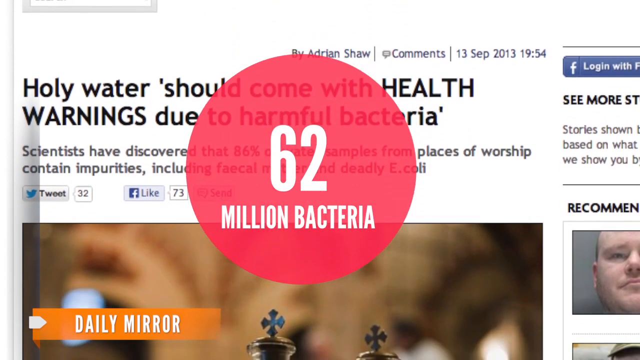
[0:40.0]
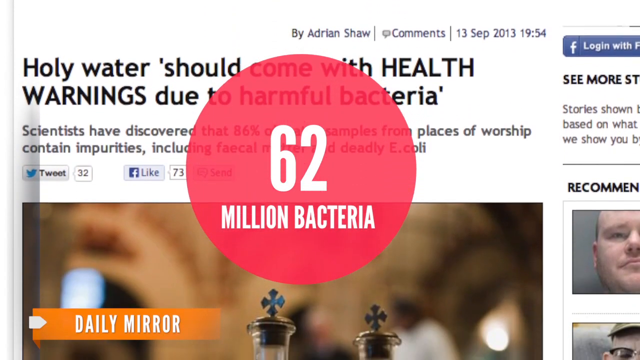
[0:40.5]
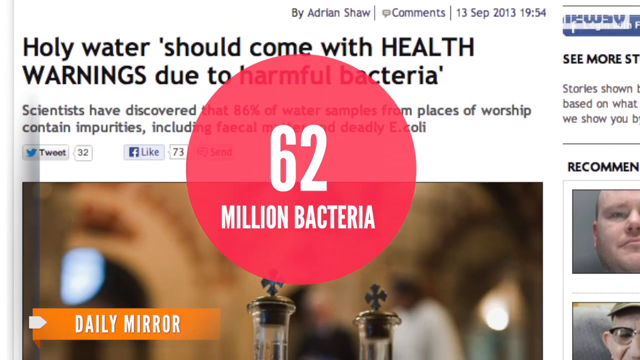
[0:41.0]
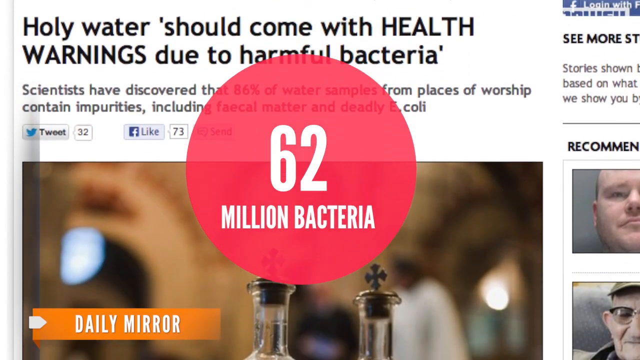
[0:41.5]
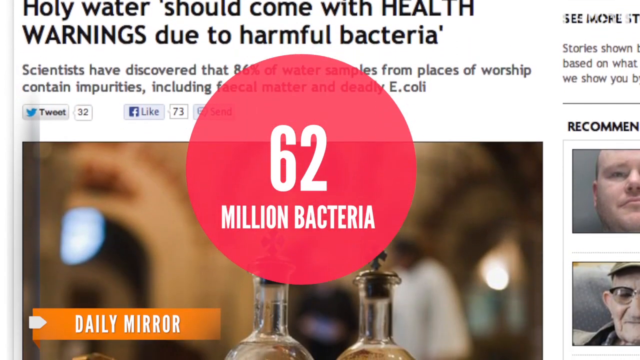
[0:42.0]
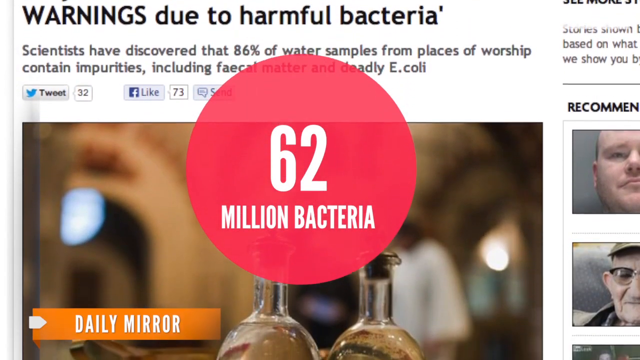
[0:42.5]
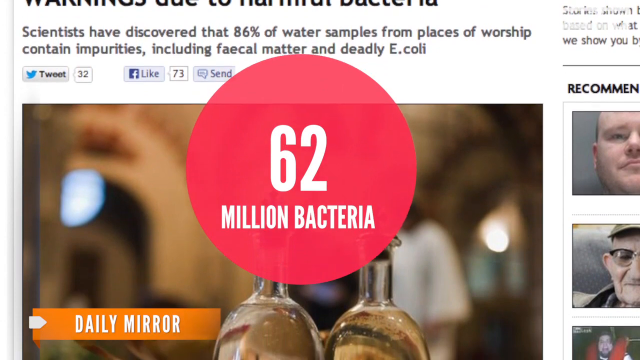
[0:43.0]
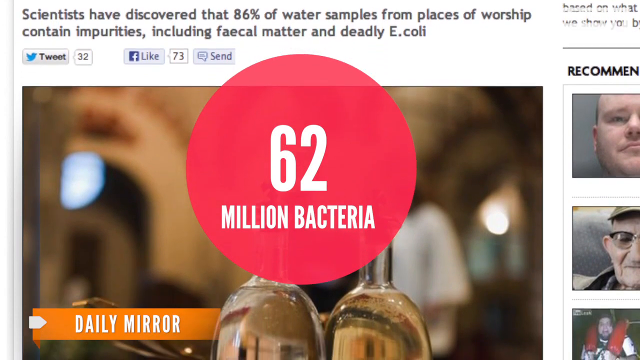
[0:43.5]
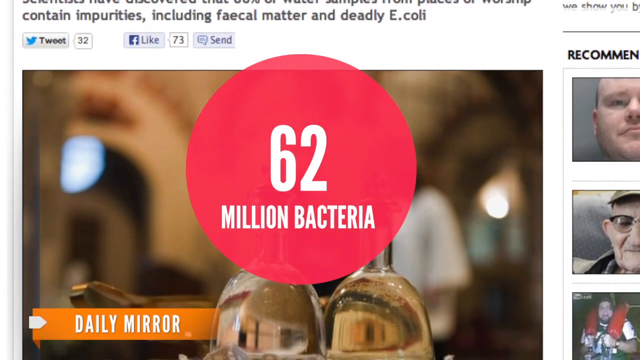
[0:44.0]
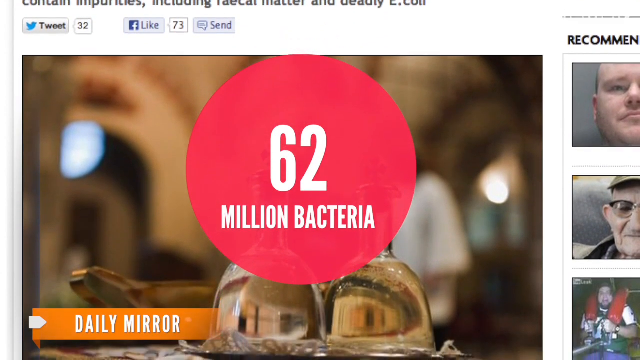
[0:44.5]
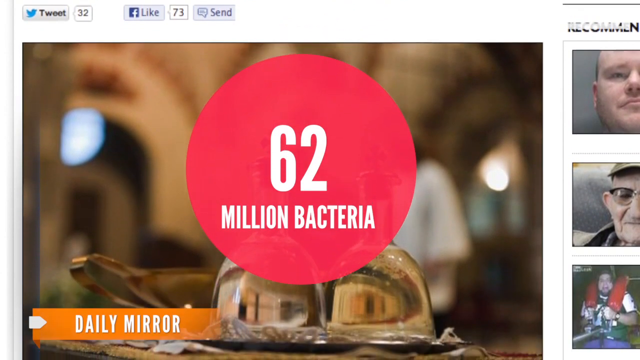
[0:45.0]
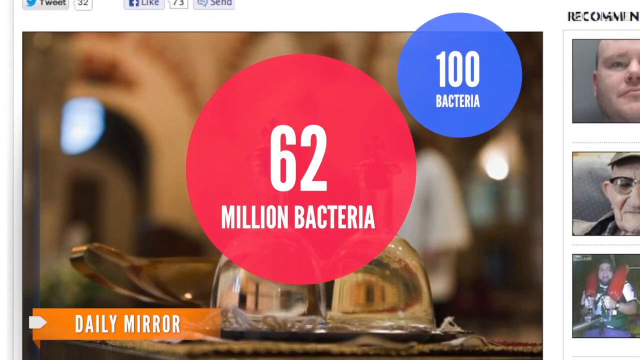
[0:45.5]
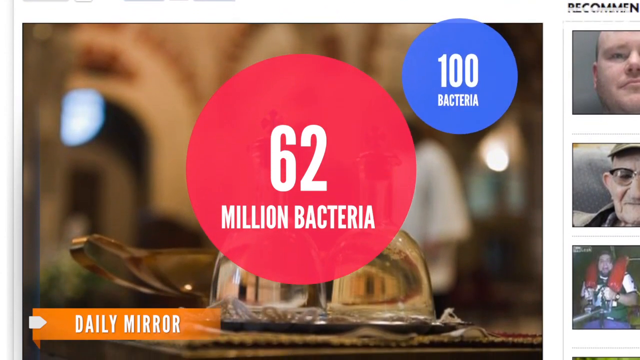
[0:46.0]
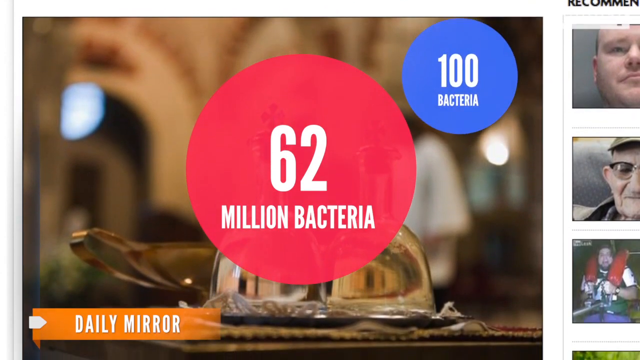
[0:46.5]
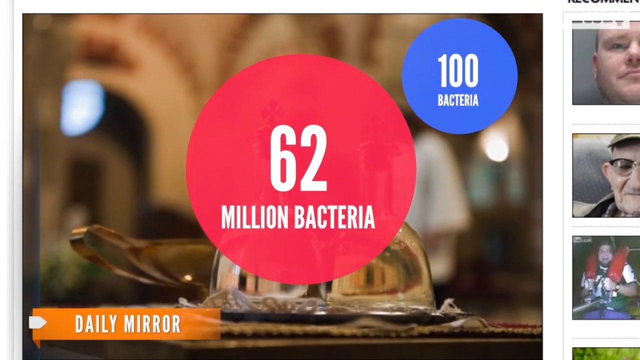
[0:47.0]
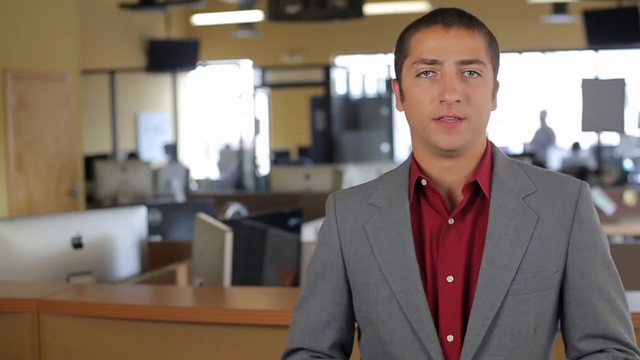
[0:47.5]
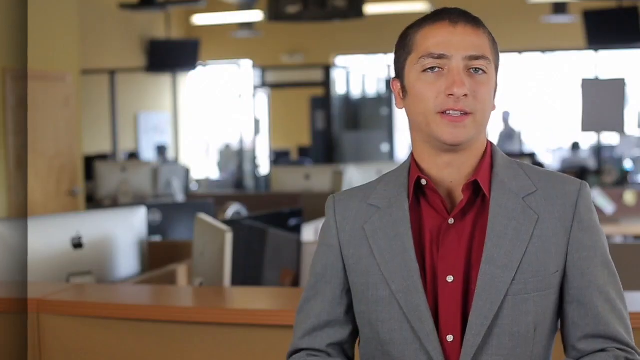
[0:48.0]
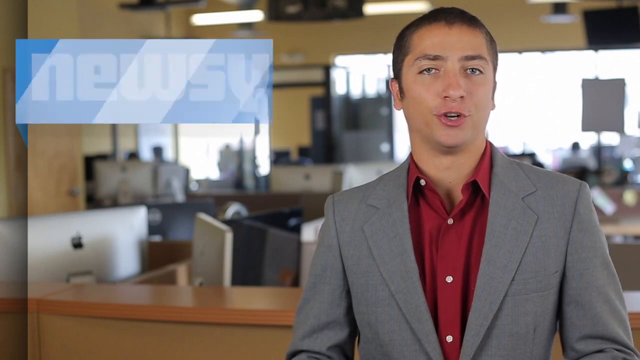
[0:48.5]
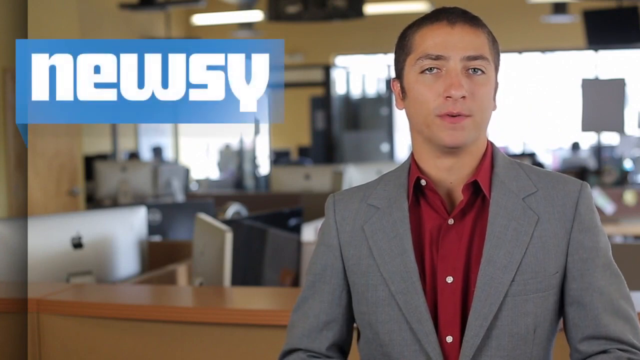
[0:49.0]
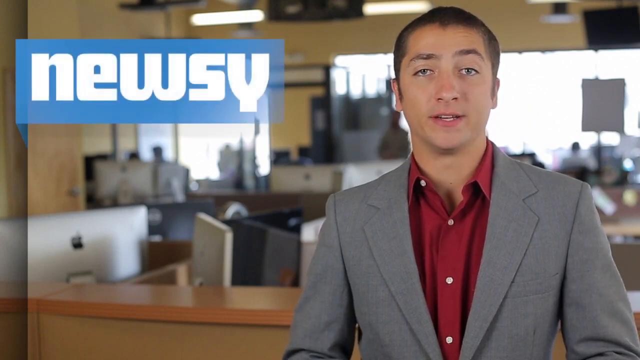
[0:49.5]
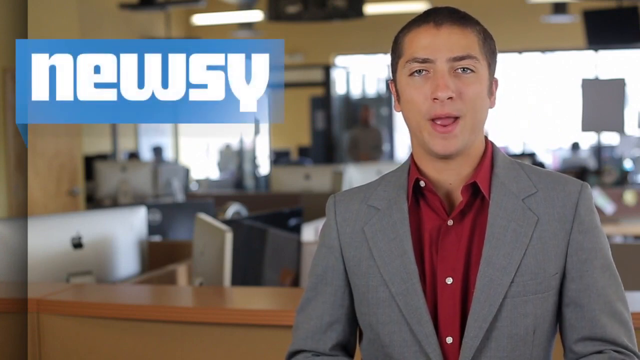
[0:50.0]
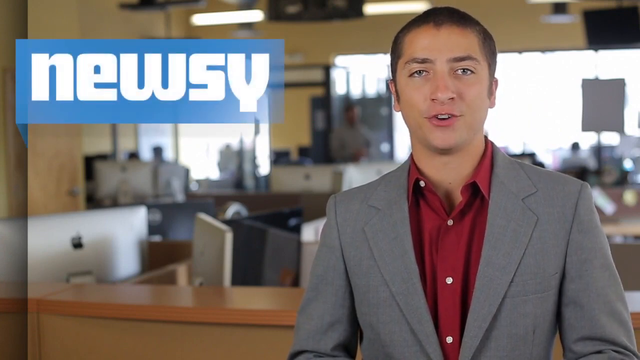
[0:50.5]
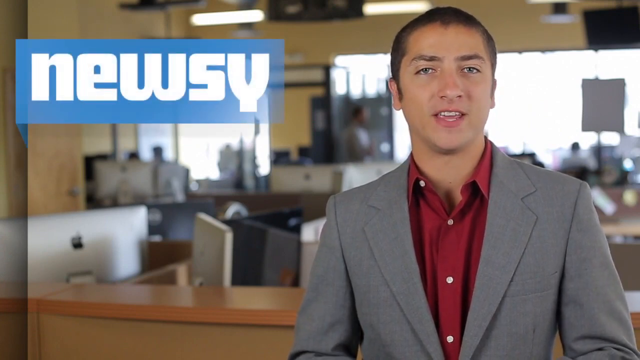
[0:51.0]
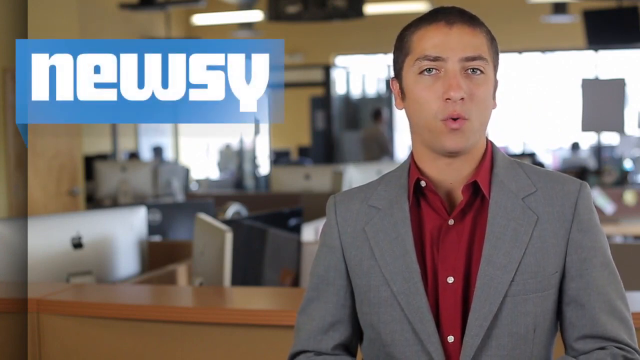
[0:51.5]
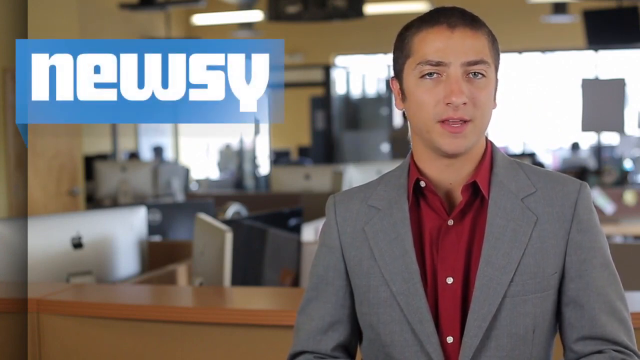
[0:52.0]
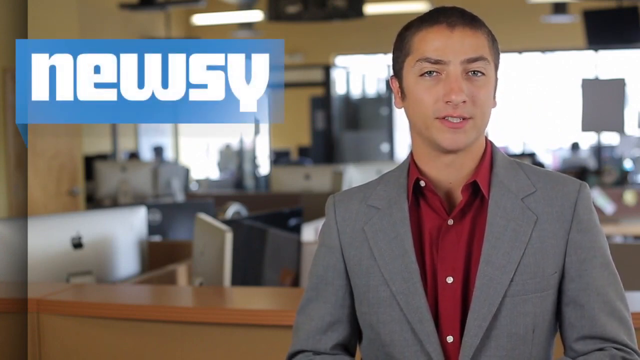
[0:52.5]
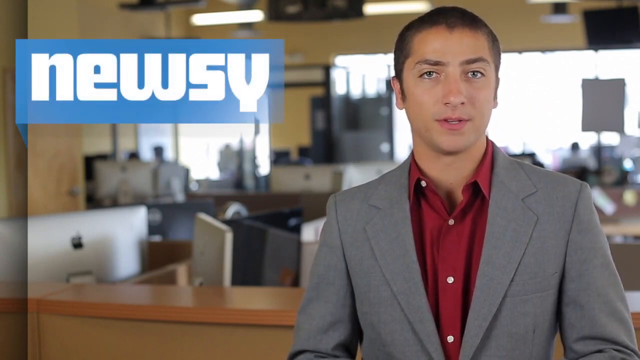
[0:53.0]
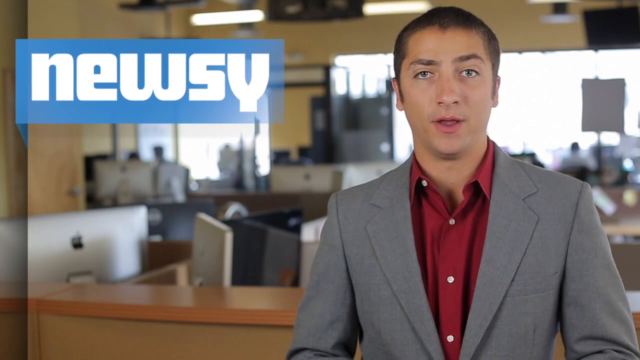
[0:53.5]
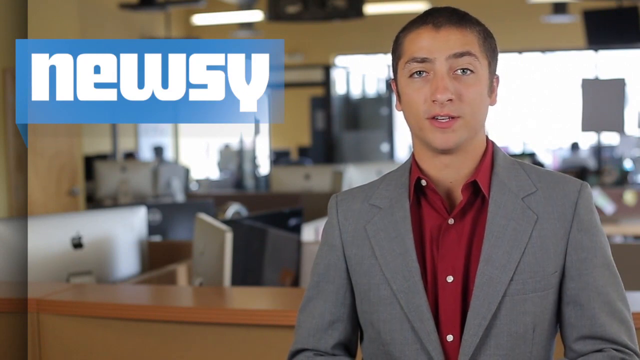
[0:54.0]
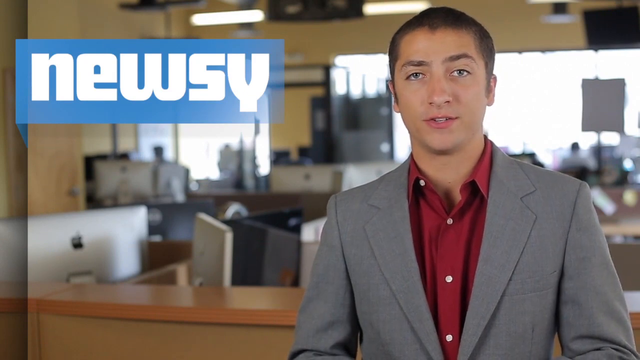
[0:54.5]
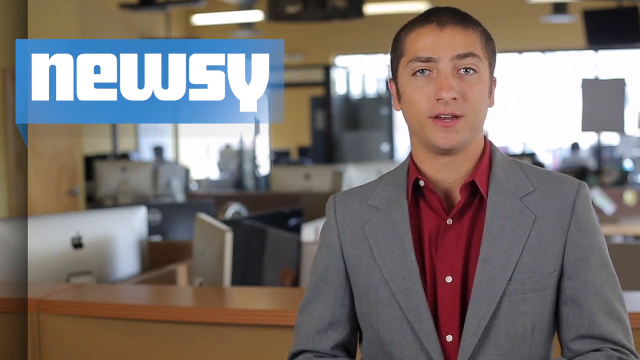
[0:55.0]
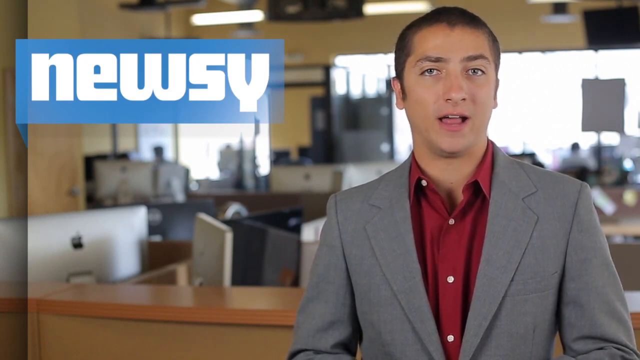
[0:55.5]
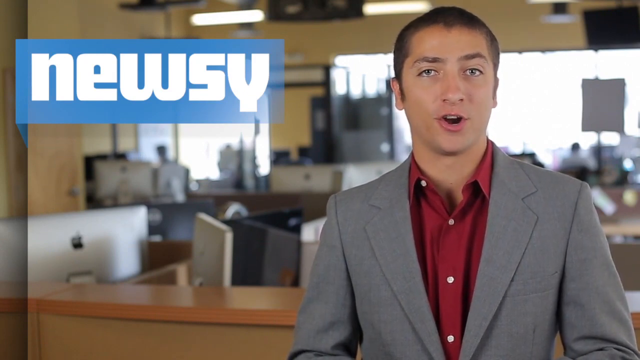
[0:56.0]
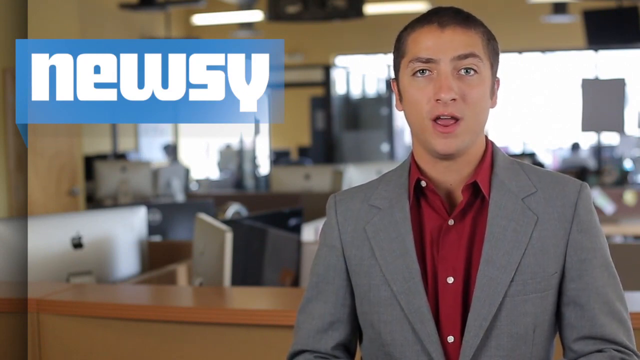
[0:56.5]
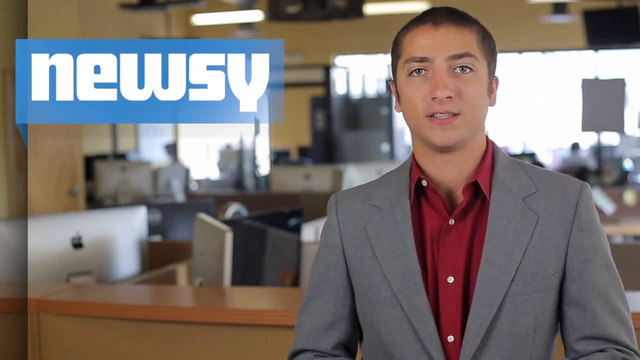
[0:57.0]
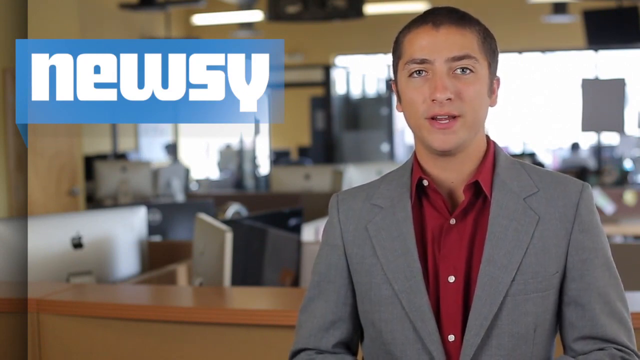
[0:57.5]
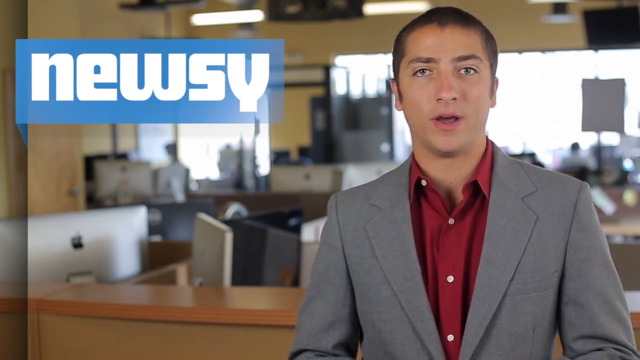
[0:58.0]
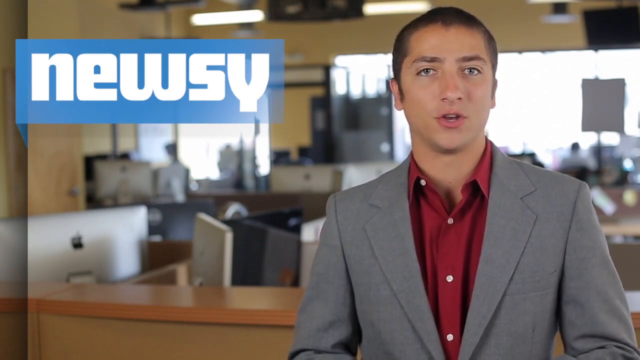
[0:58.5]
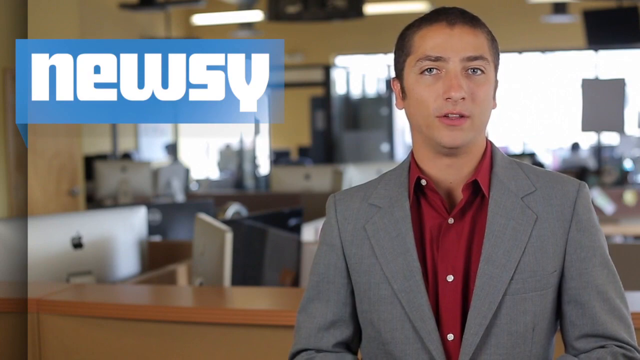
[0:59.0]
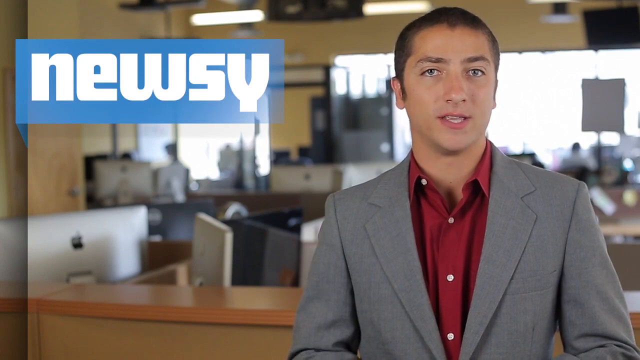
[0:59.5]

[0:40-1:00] Large text reading "62 million bacteria" appears on a pink background, followed by "100 bacteria" on a blue background. The Newsy reporter then returns: a man with short brown hair, a gray suit and a red shirt. He talks to the camera the whole time, apparently explaining the situation, with a very serious face and no gesturing. Behind him are a Mac desktop and another desktop apparently running Windows software, along with desks and tables.